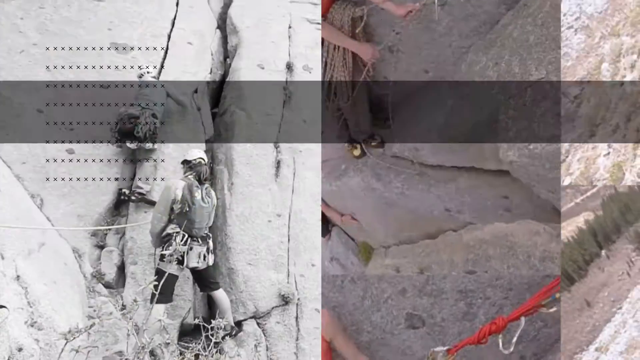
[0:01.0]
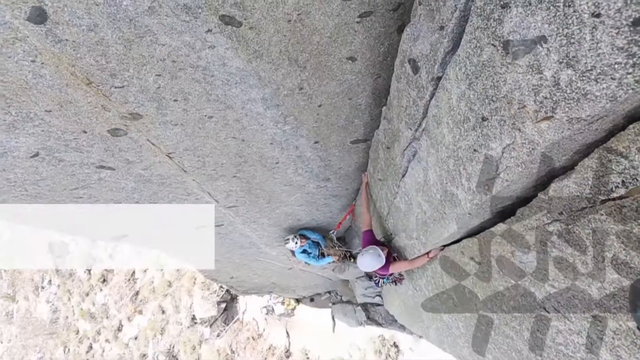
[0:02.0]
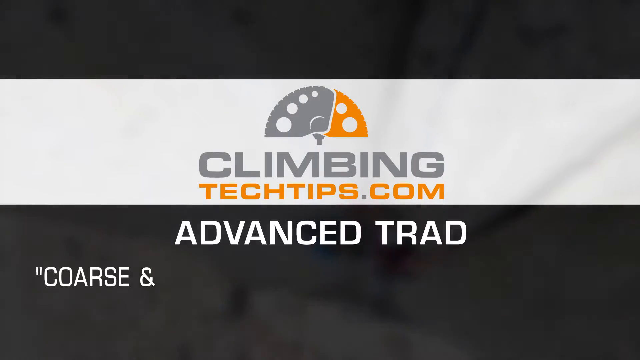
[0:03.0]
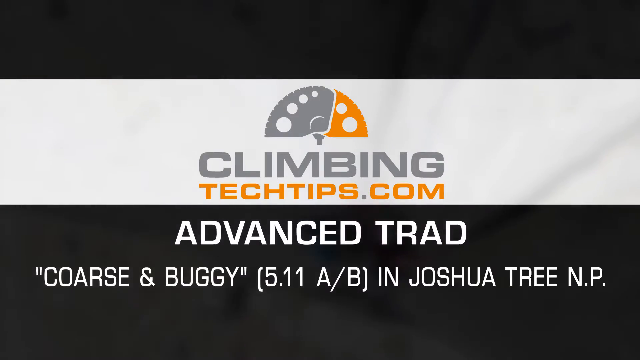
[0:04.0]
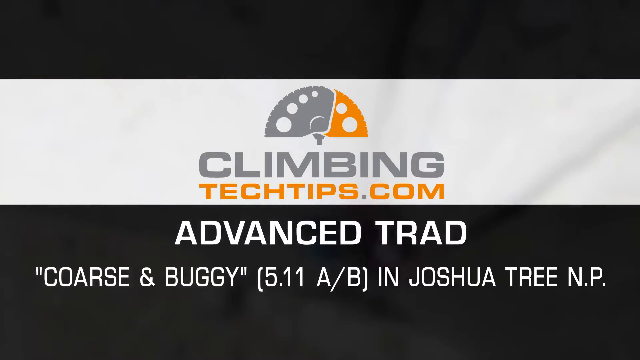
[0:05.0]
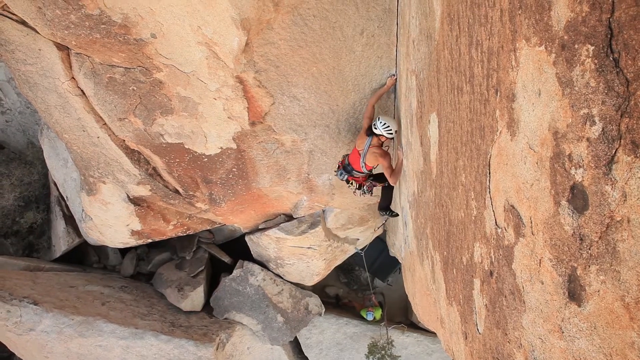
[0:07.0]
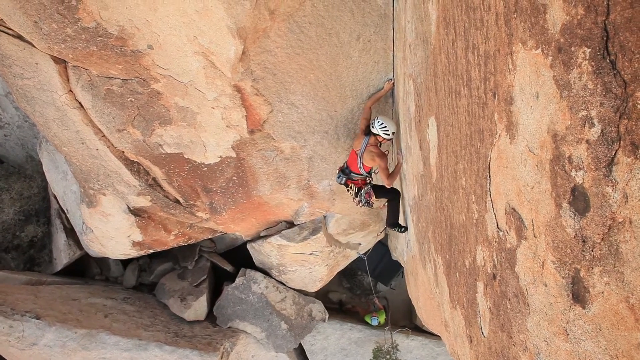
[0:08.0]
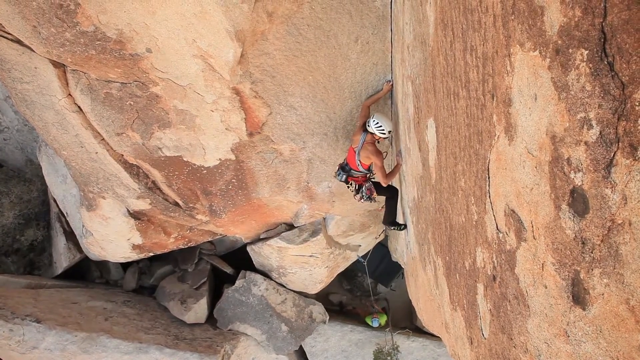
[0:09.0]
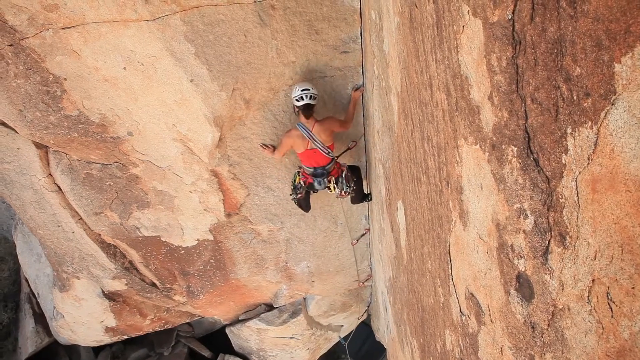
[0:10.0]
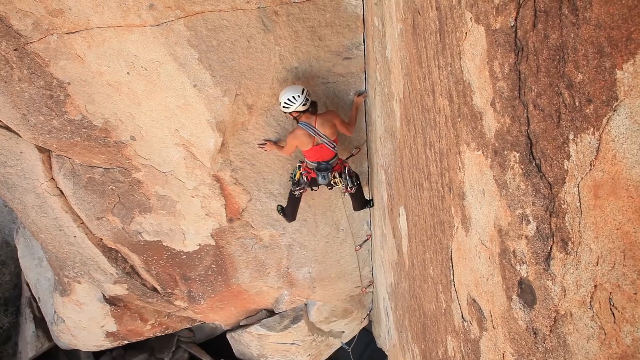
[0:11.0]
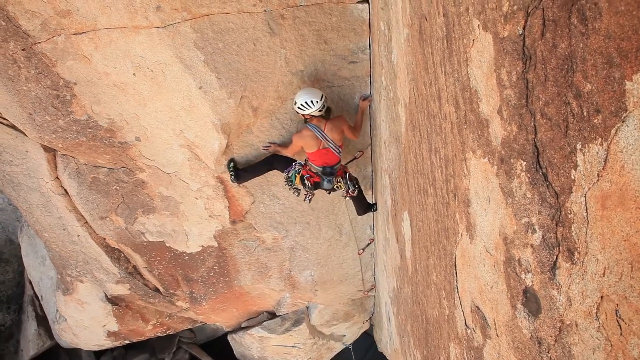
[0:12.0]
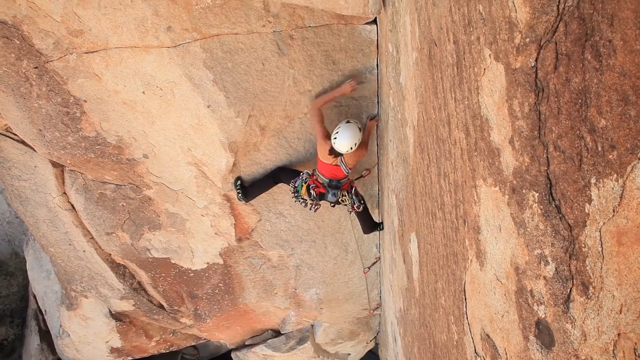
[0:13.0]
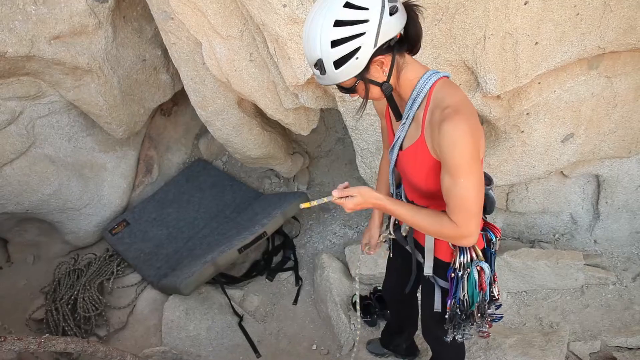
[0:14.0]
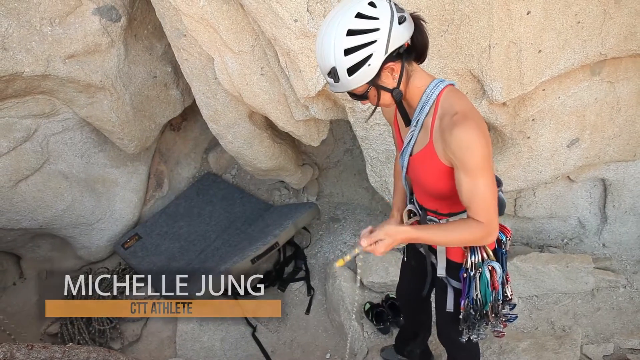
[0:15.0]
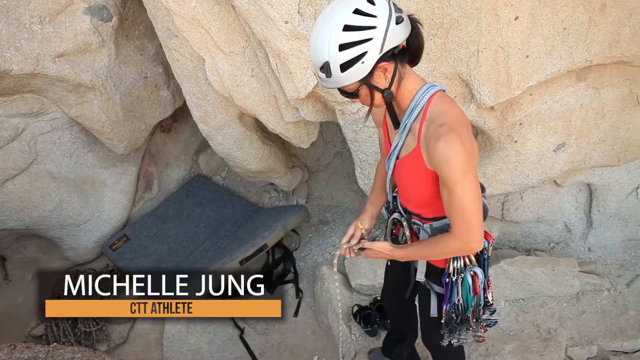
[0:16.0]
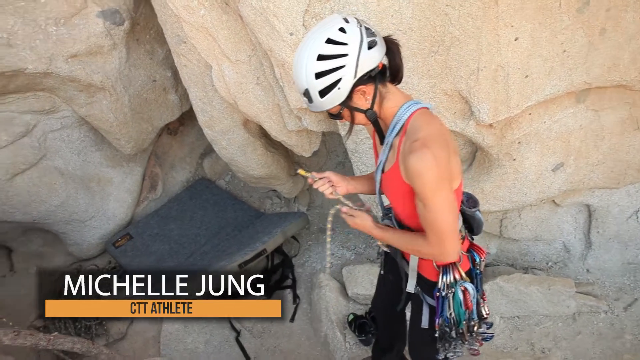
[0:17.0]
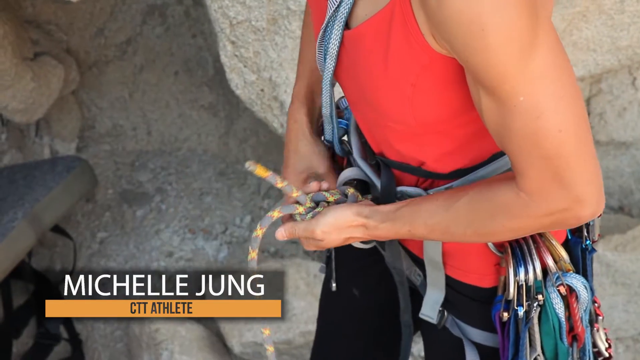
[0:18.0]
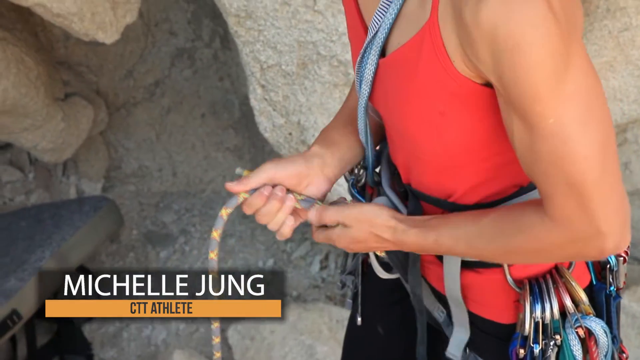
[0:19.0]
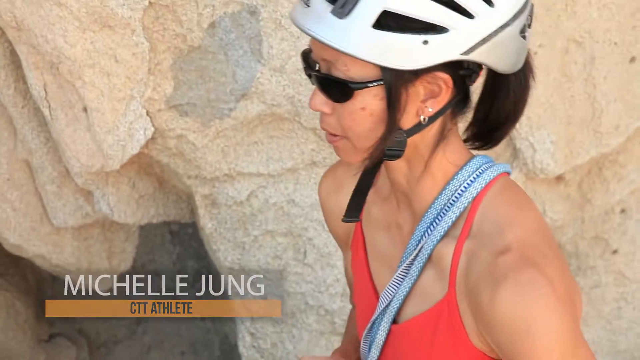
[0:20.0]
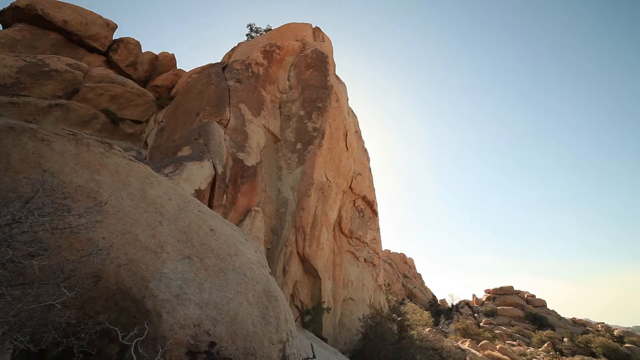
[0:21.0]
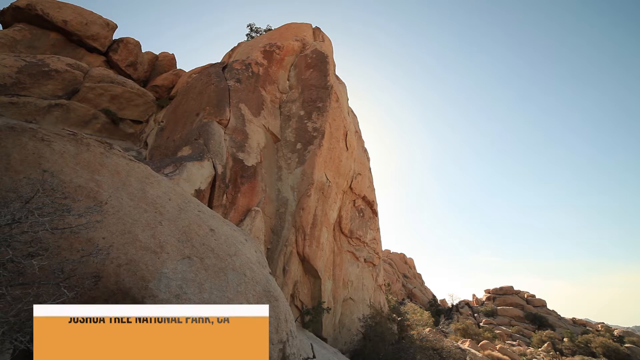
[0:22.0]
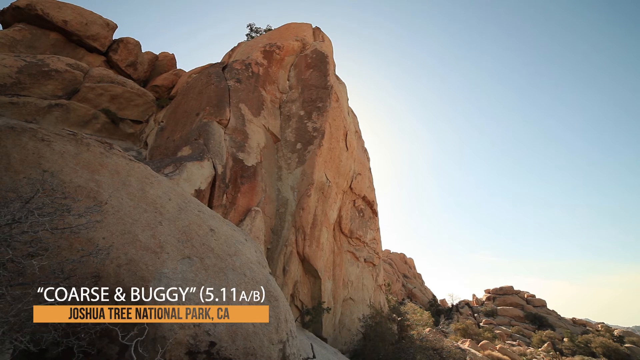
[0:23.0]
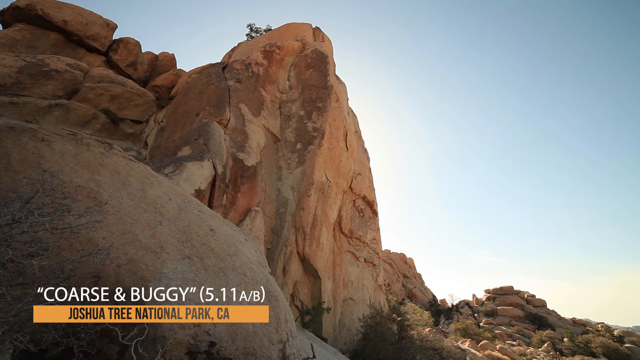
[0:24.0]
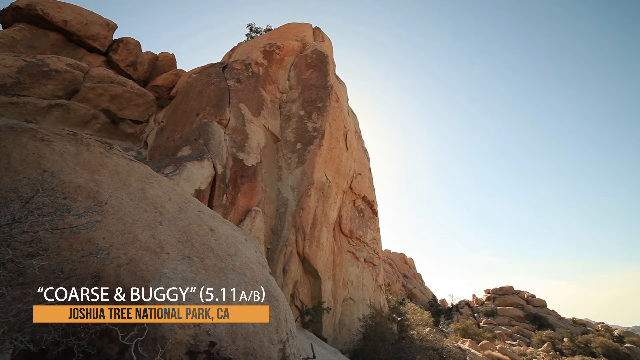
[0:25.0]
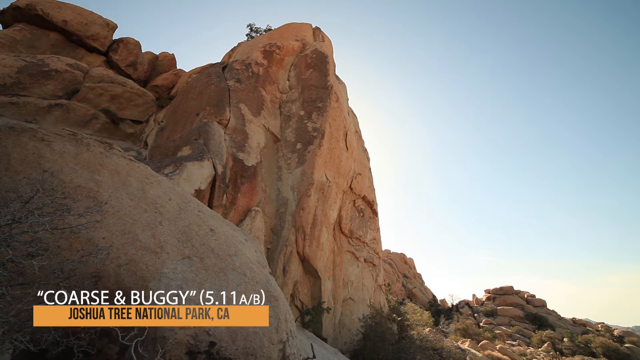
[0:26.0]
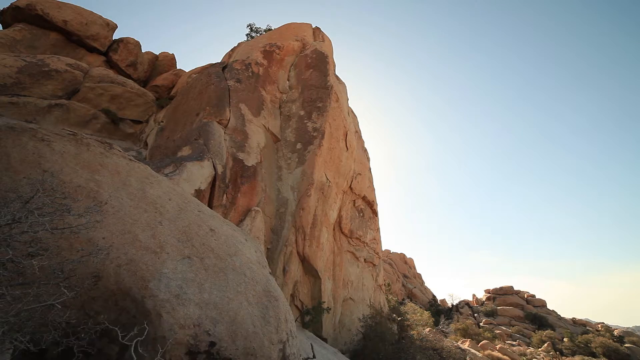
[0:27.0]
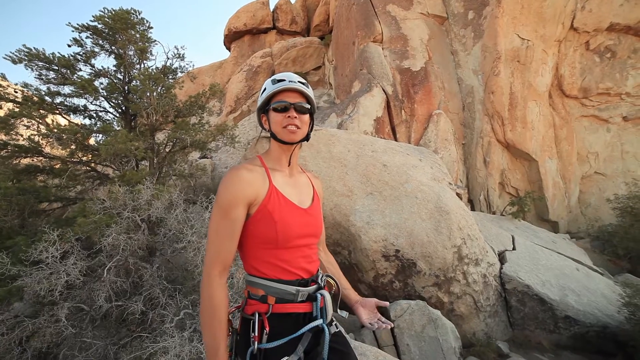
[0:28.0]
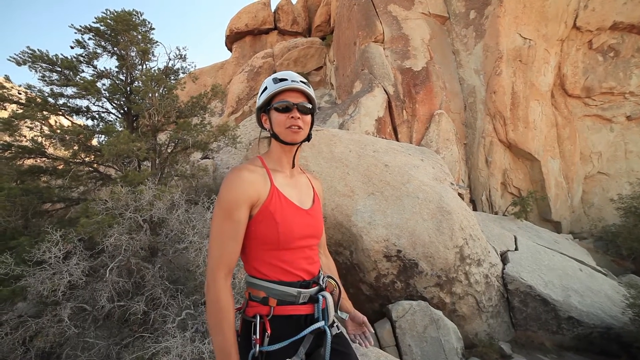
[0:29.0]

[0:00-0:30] The video appears to show rock climbing. On-screen text reads "climbing techtips.com advanced trad" and "course in buggy in Joshua Tree NP." A woman climbs up a rock, wearing a white helmet, a pink top and black pants. Her name appears as Michelle Jung (spelled J-U-N-G), with the text "CTT athlete." She ties a rope to her waist, and she appears to be Asian. Text reads "course in buggy" and "Joshua Tree National Park, CA." Outside there is sunlight, trees and a lot of rocks. More people are also participating.